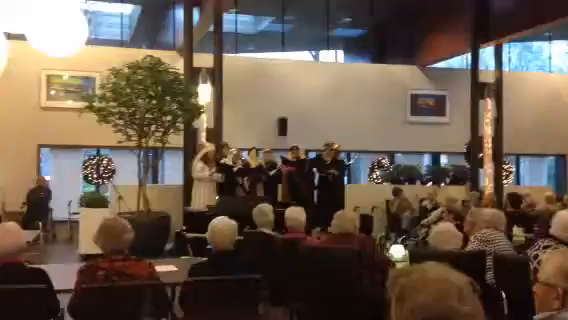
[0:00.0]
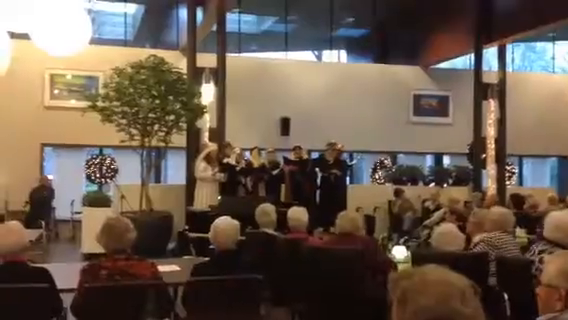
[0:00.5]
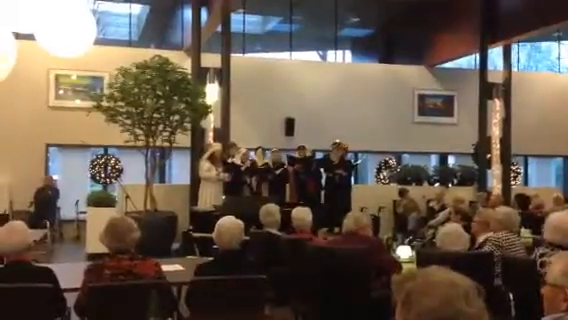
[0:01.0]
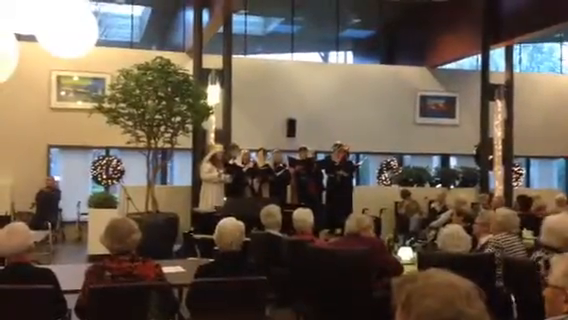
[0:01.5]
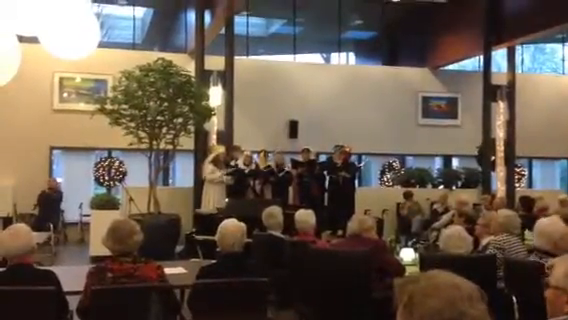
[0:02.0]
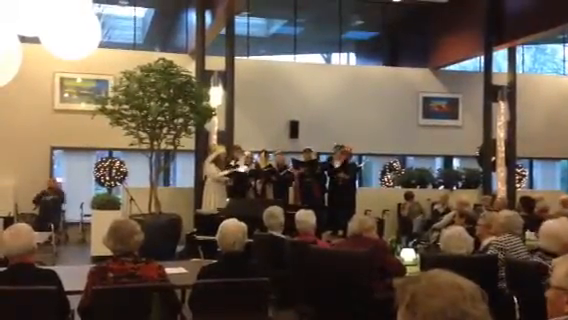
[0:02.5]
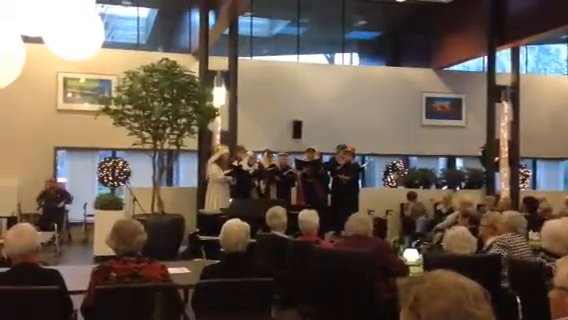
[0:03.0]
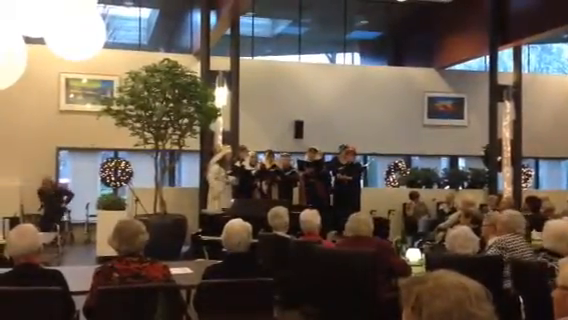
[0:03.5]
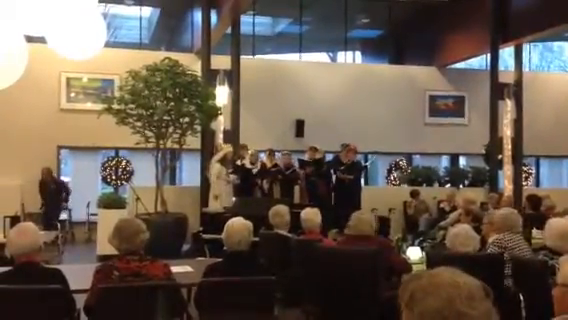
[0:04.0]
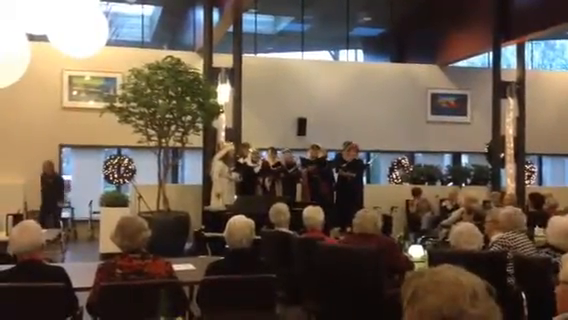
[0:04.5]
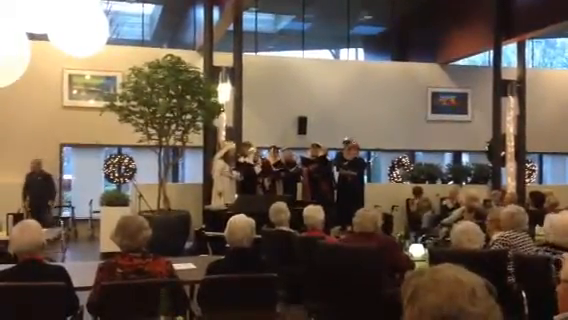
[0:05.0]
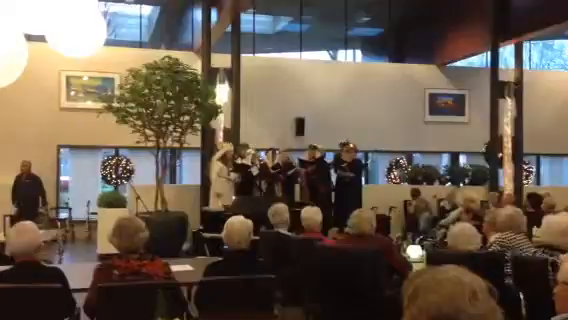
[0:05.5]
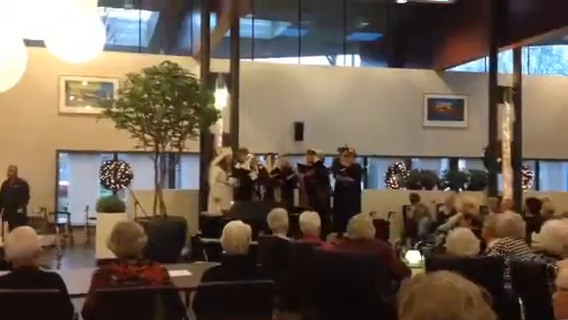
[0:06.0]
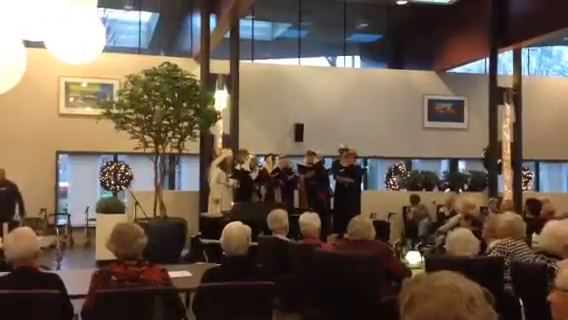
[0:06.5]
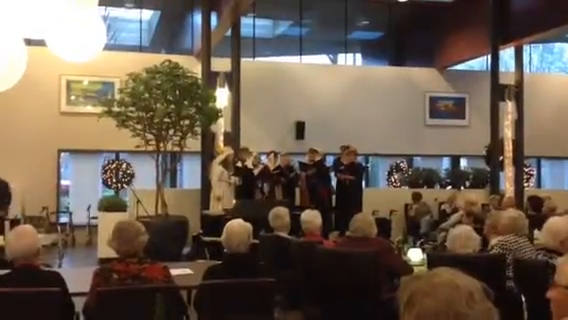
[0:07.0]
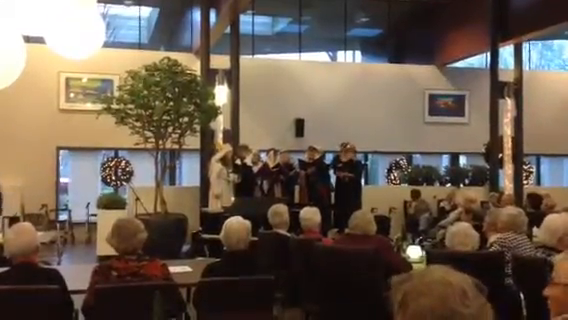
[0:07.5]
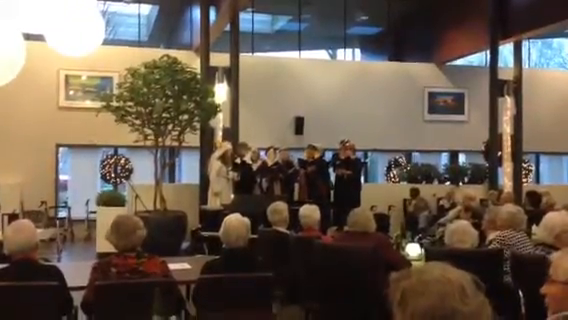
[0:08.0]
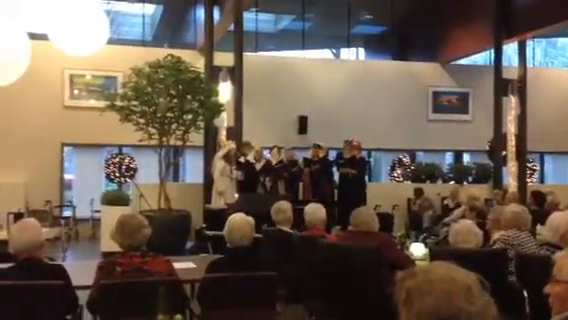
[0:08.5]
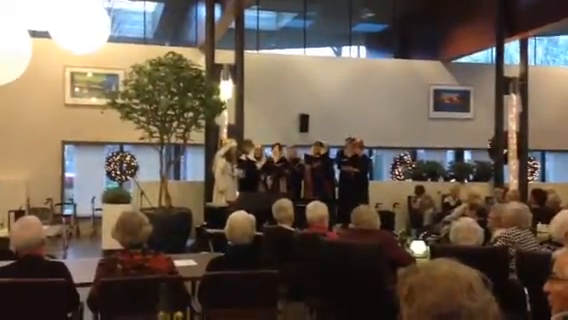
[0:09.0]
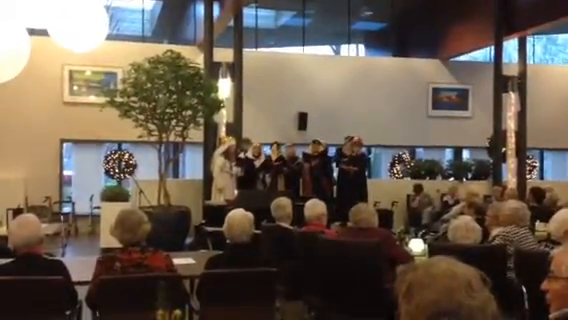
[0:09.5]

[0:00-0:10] Inside a building, there is a stage with pillars on either side of it, and the overall decor is very modern. Indoor trees are visible, some illuminated by LED lights. A large crowd of people sits in the seating area; for the most part they appear elderly, with white hair being most common, and they are all focused on a group of individuals up on the stage platform. The people on stage hold paper sheet folders and appear to be singing along in unison, so it appears to be a singing performance. The walls of the facility are white, with large reddish-brown beams overhead crisscrossing the walls. There are many glass windows: most of the upper wall is large window panes, and there are windows on the ground level behind the stage as well.